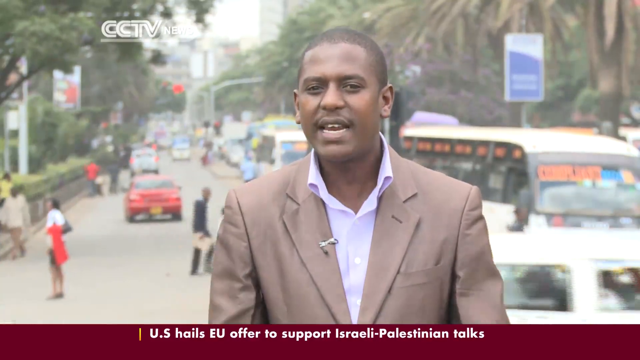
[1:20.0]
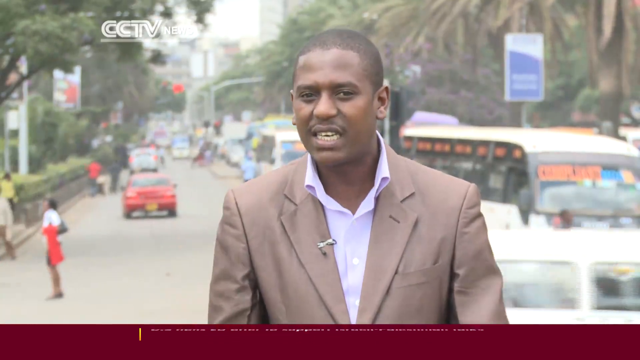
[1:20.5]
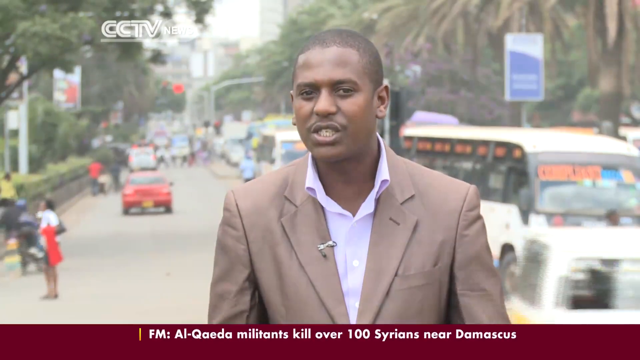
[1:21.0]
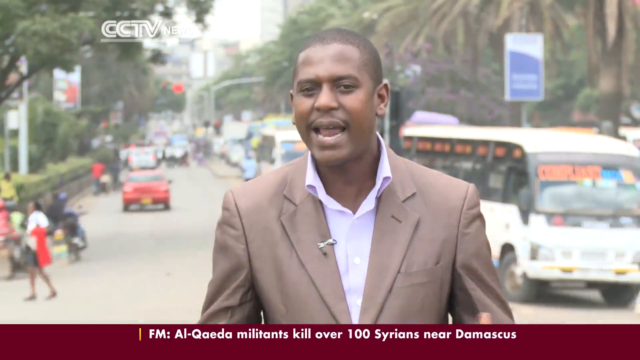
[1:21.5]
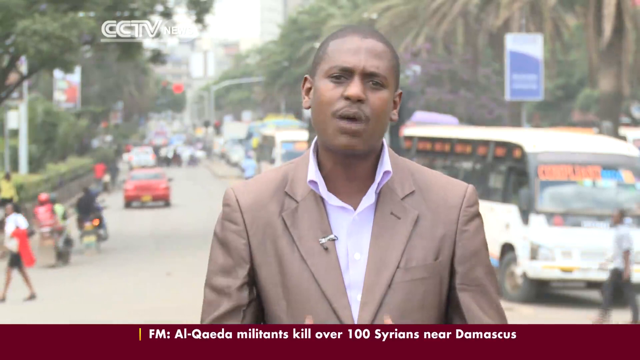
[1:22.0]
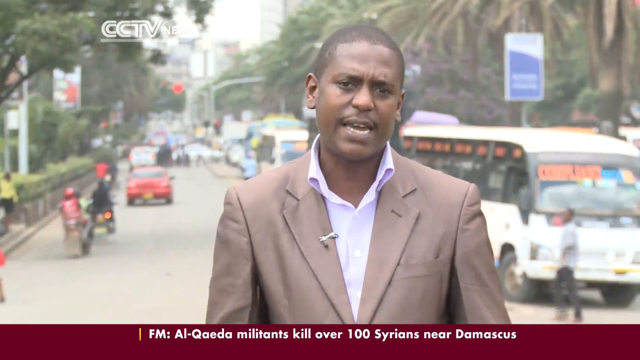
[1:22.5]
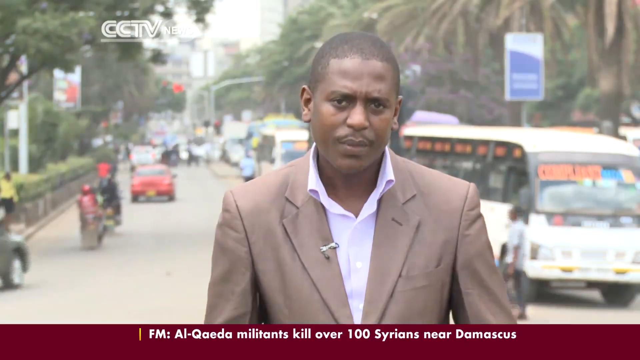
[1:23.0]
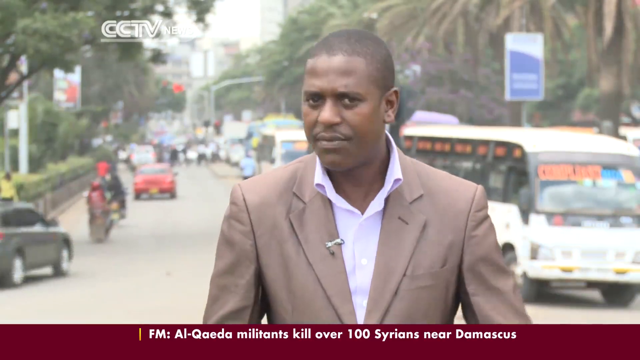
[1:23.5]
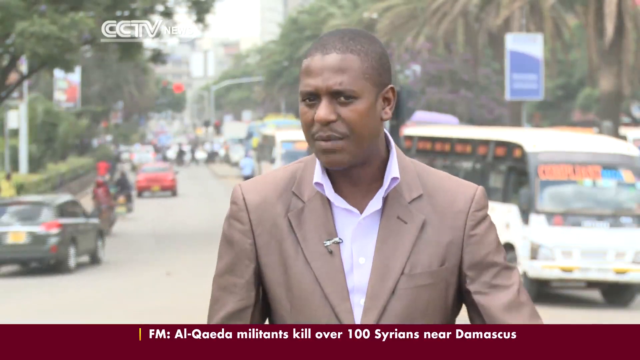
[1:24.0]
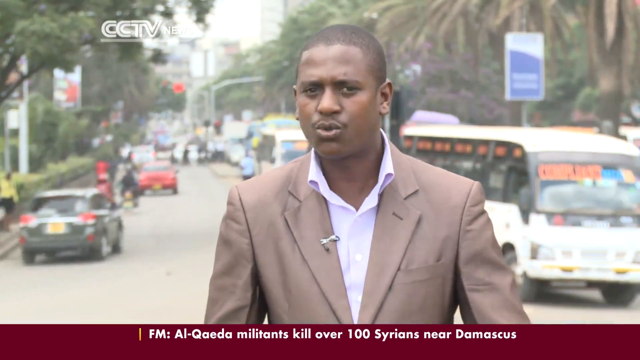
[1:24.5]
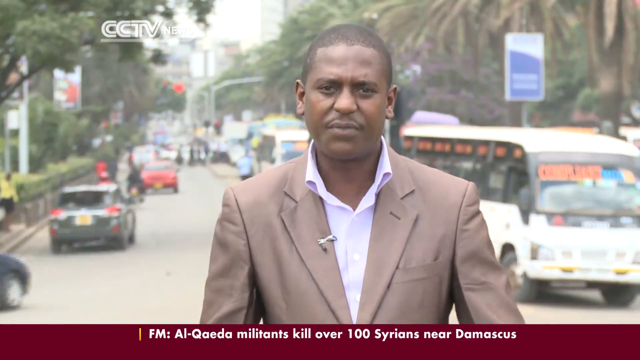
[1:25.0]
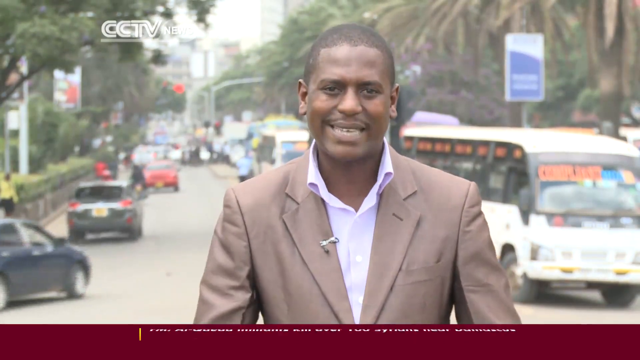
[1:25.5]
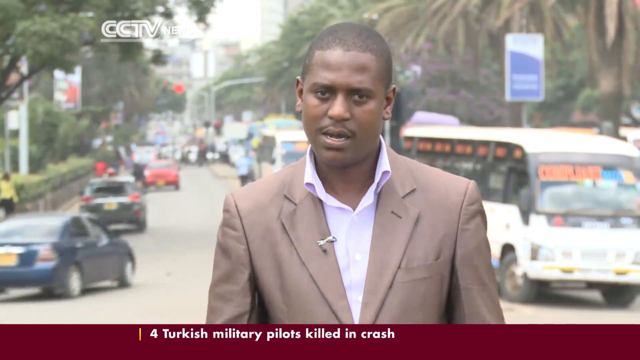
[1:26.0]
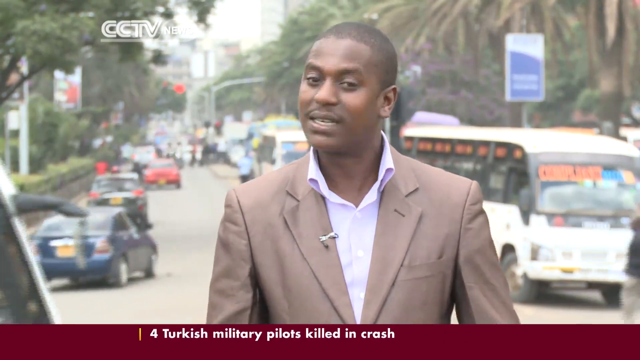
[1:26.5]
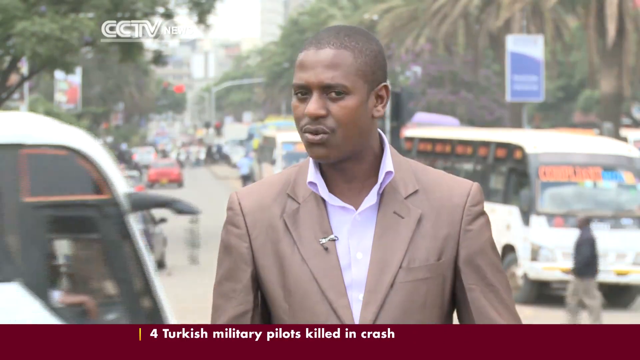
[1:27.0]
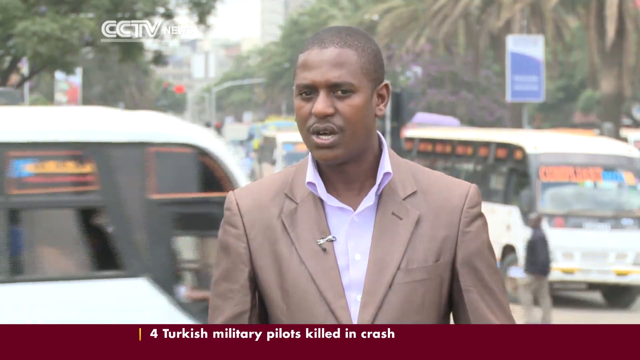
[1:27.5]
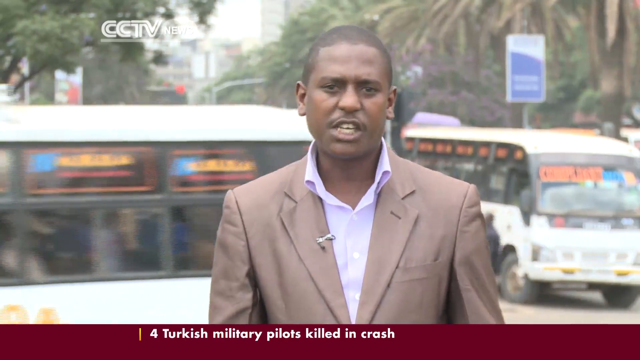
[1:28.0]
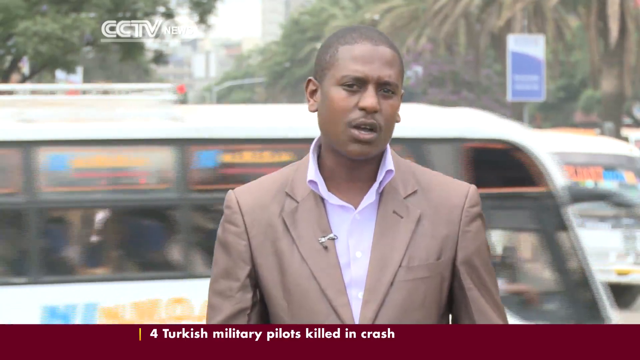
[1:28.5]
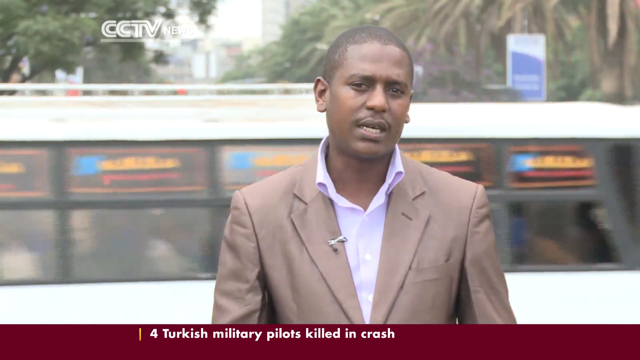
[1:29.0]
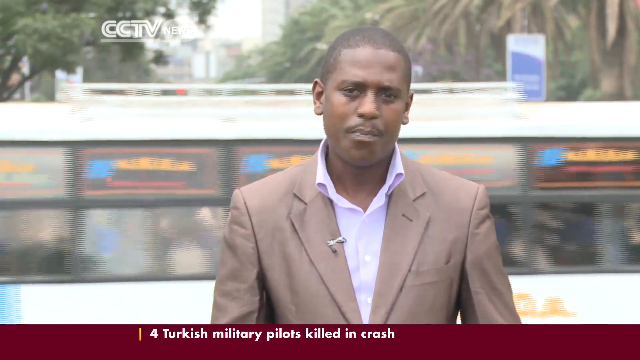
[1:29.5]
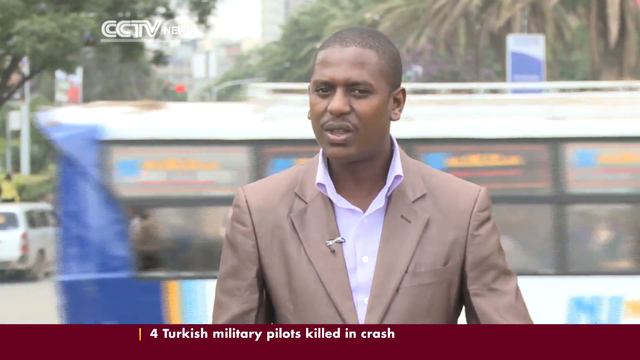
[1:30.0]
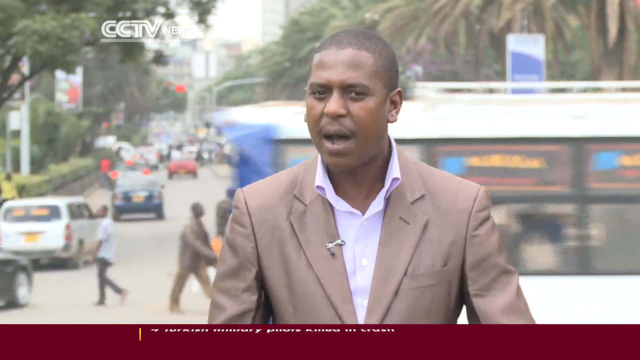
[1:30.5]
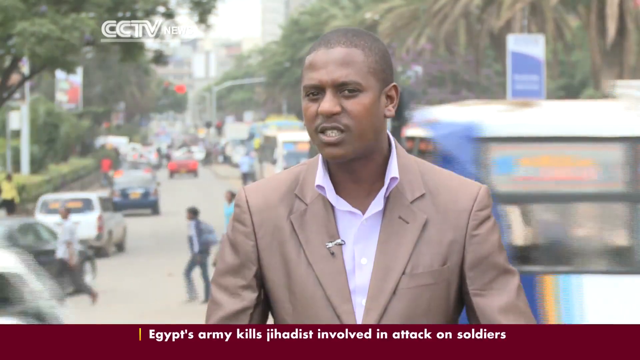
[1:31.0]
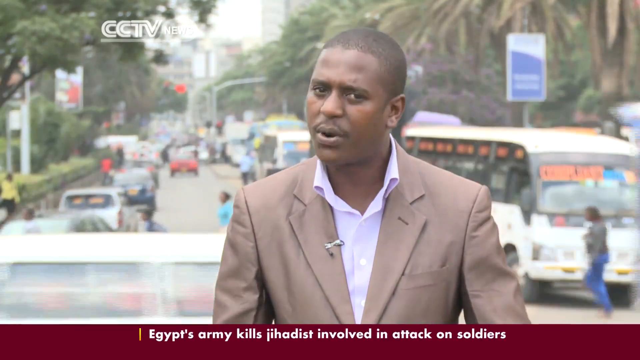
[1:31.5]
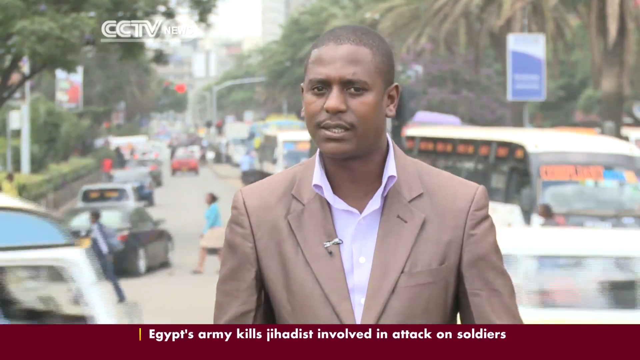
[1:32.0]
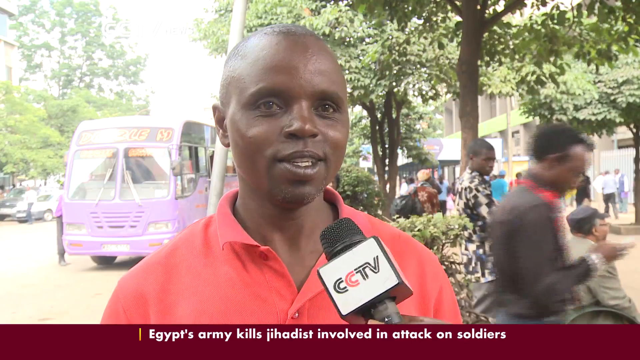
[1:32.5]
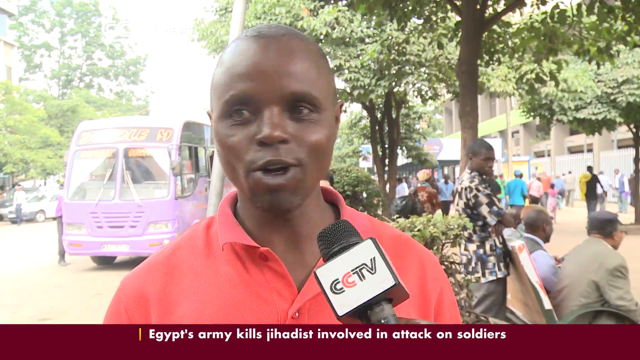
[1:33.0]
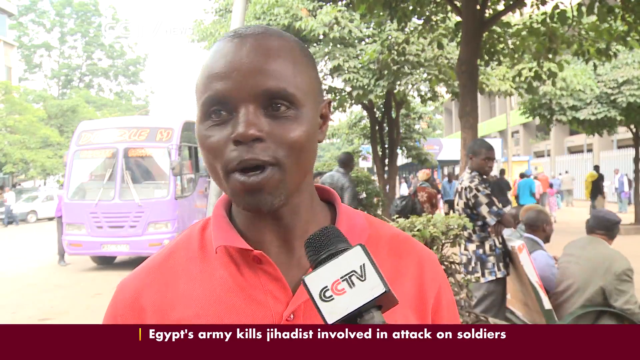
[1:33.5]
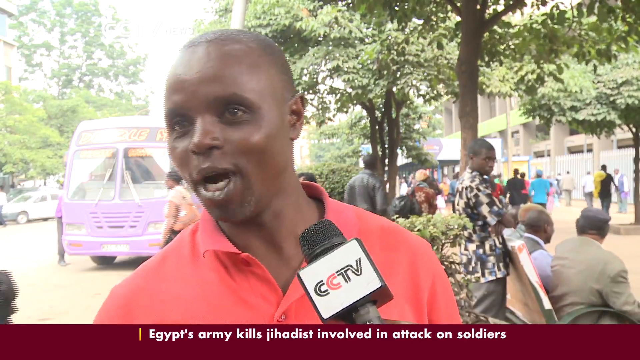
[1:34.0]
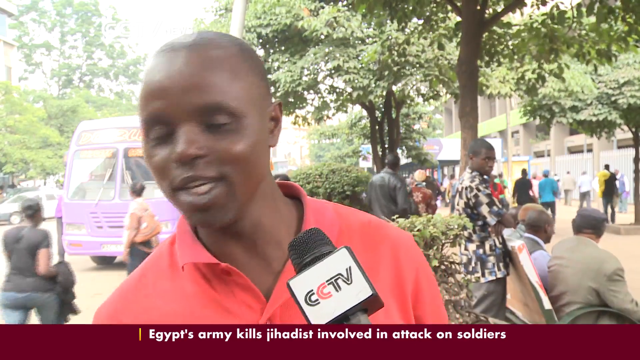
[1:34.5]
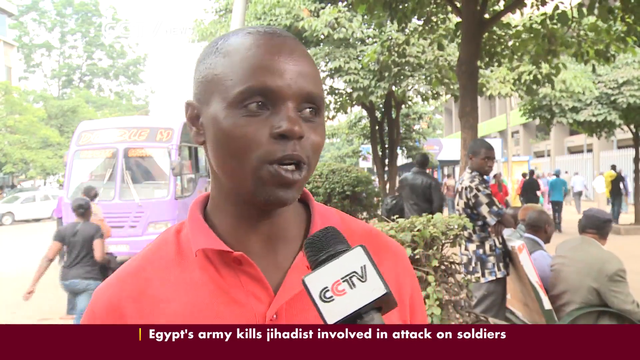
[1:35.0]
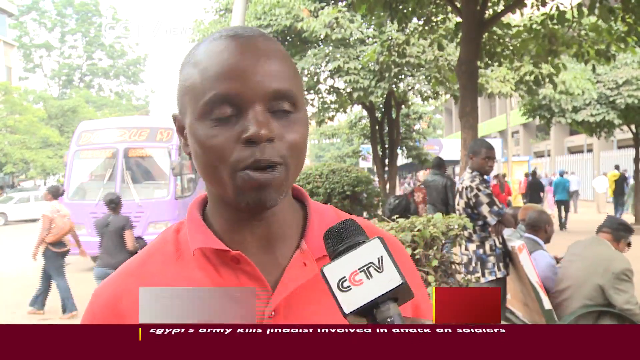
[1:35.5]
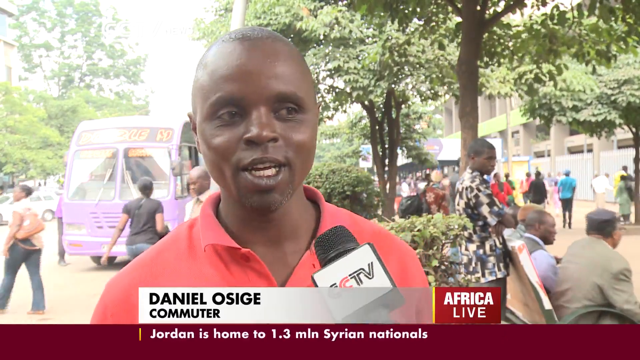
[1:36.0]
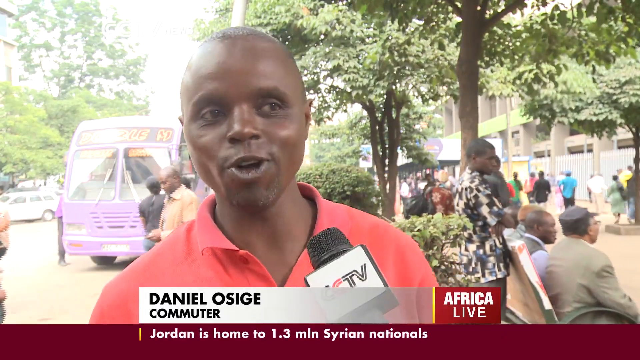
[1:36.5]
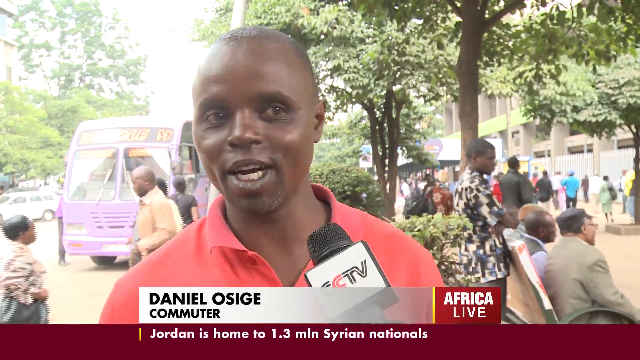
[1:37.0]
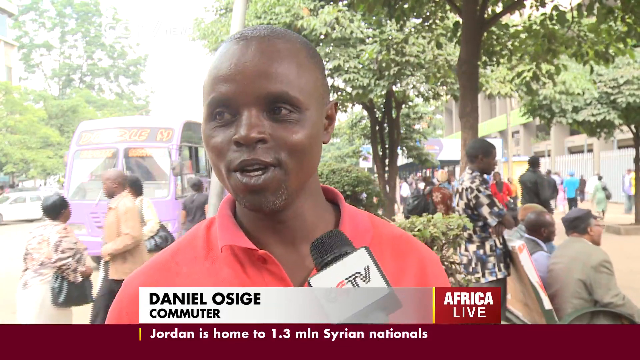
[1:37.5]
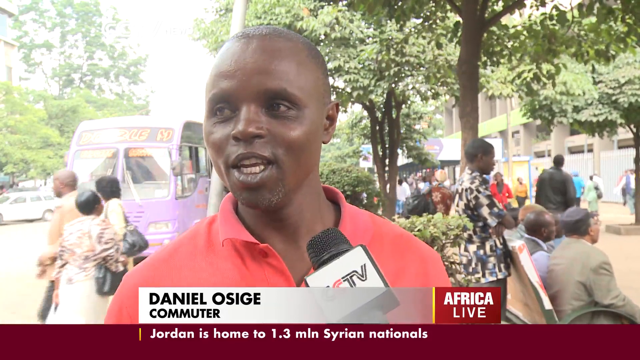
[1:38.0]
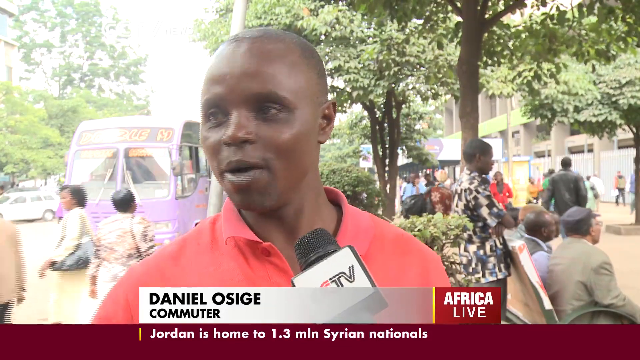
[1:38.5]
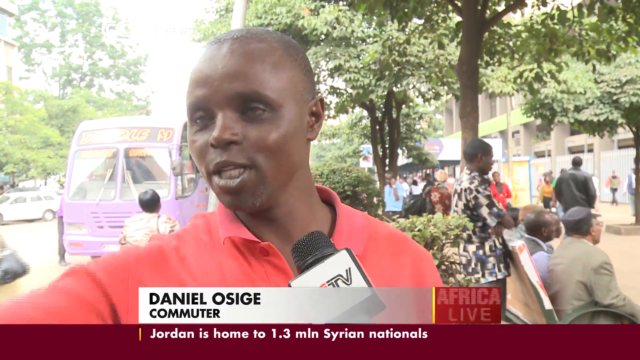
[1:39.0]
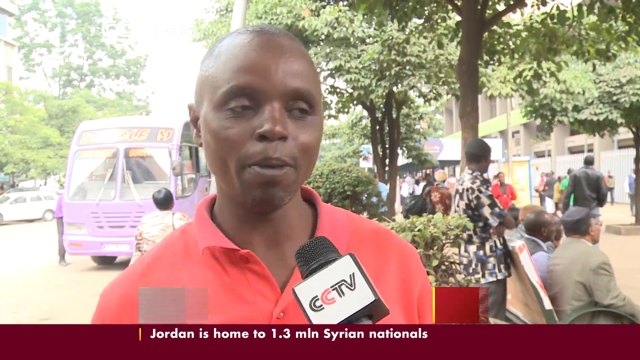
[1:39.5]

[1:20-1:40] The reporter, in a tan suit and a very light pink or white long-sleeved shirt with no tie, stands in front of an intersection and talks. People walk further behind him, cars go by, and a big bus passes as he speaks. The video switches to an interview with Daniel Osigi, a commuter, who wears a red shirt and looks at the reporter. He has very short black hair and is clean-shaven. People are in the distance, a pink bus is not far behind him, and there are trees in the background. It is unclear whether the bus behind him is empty.